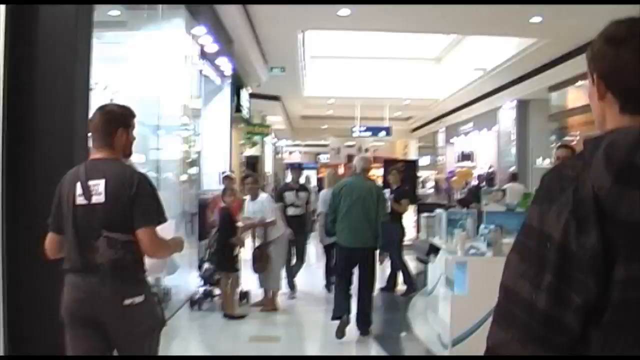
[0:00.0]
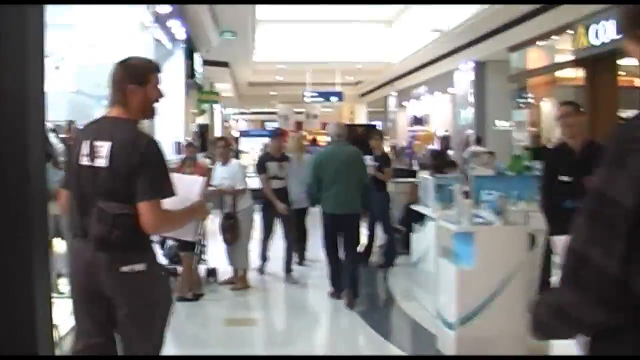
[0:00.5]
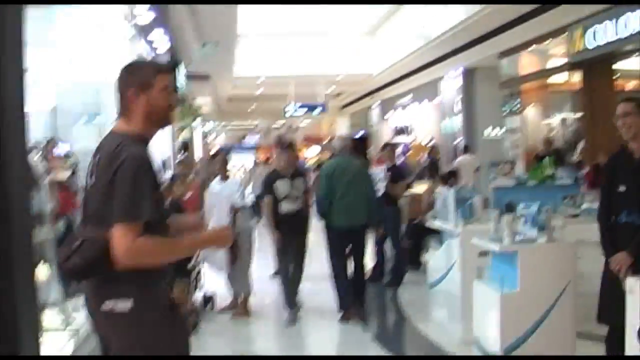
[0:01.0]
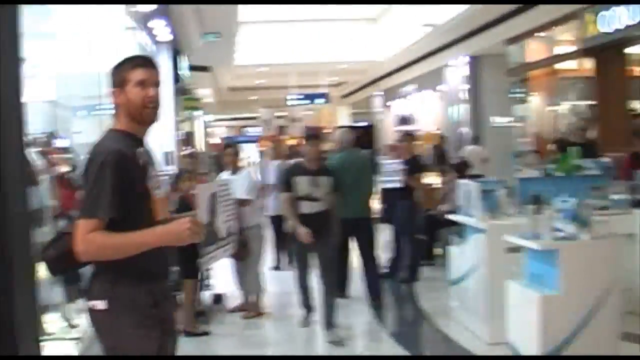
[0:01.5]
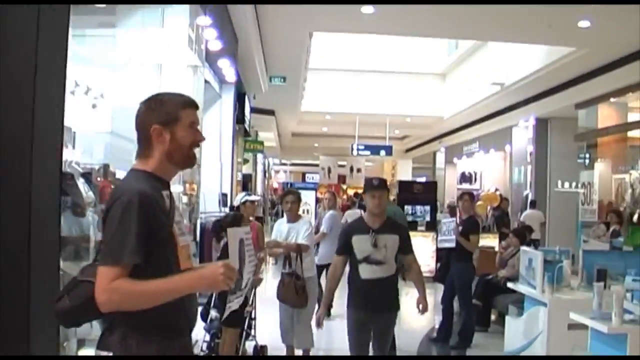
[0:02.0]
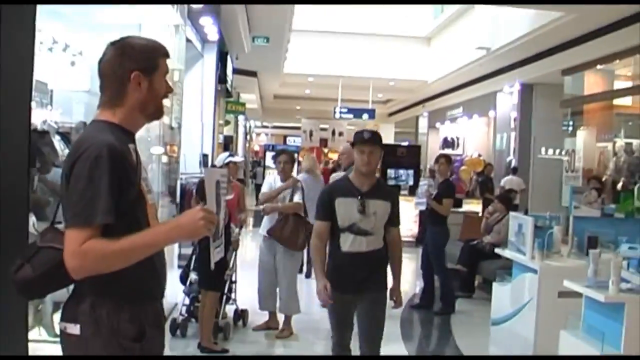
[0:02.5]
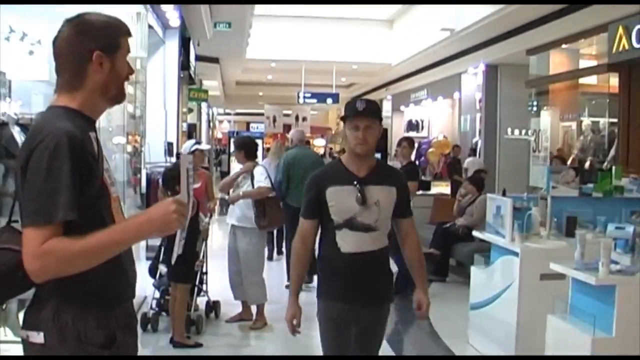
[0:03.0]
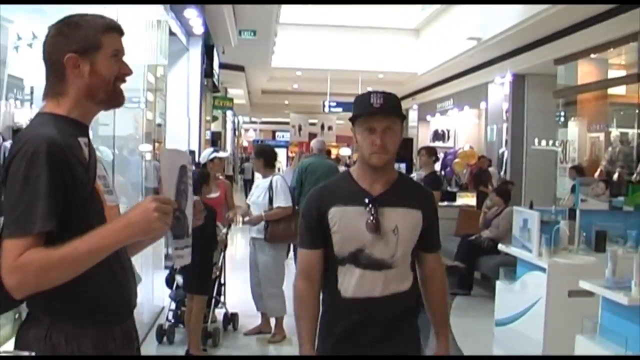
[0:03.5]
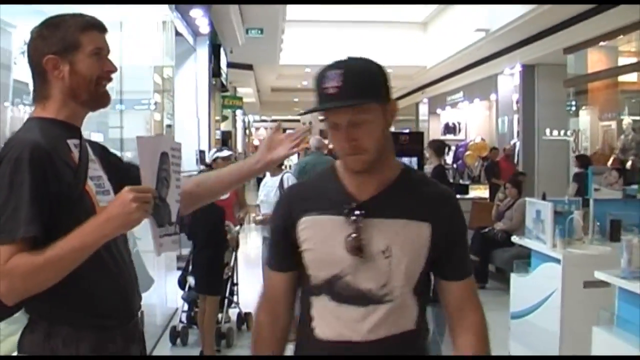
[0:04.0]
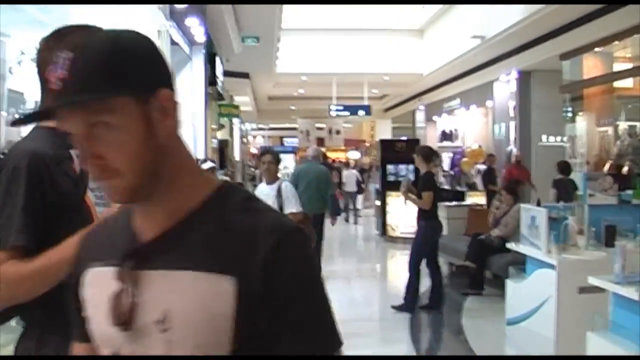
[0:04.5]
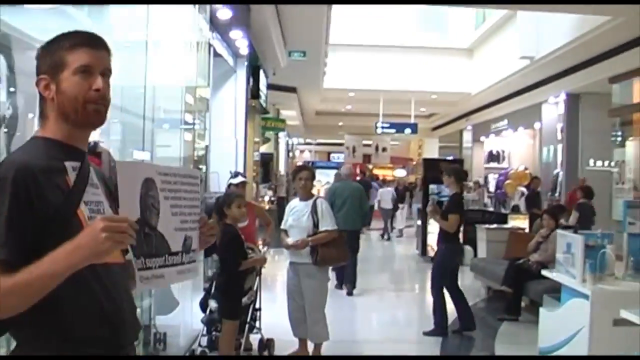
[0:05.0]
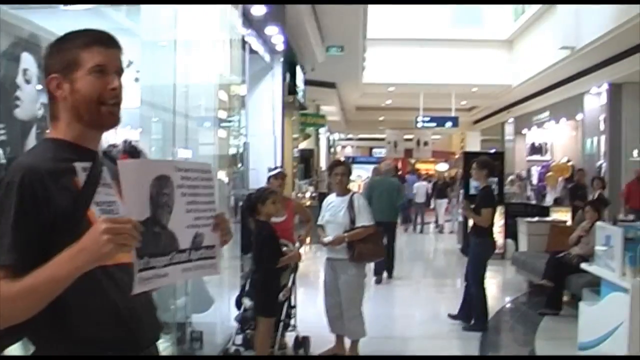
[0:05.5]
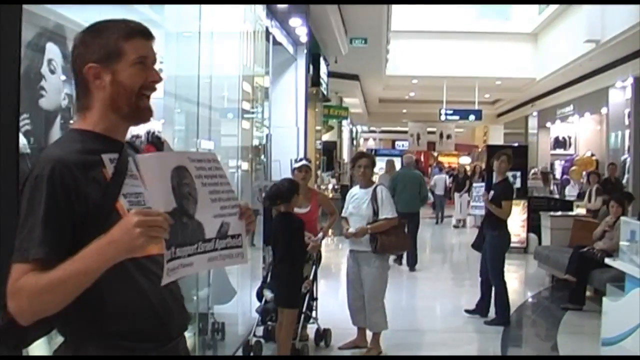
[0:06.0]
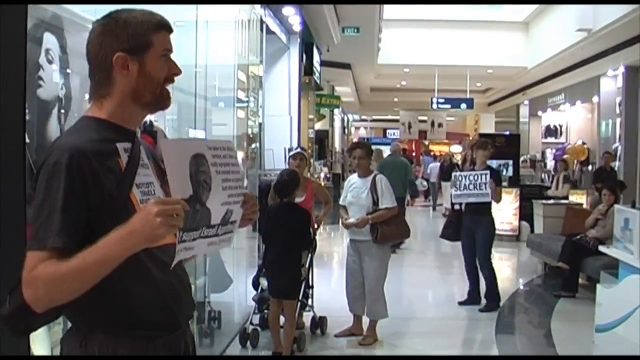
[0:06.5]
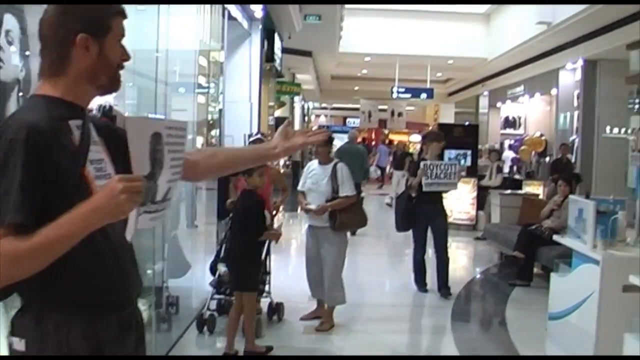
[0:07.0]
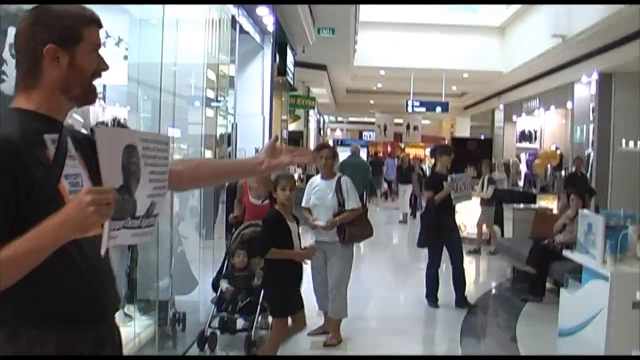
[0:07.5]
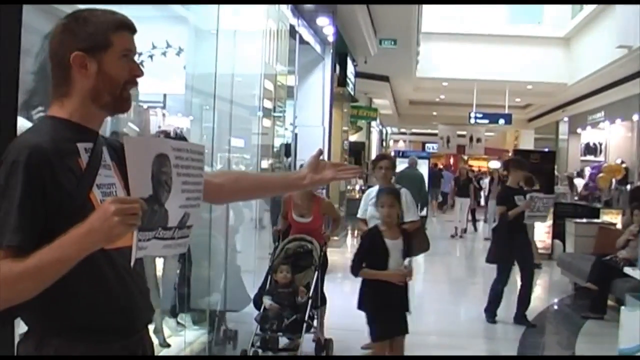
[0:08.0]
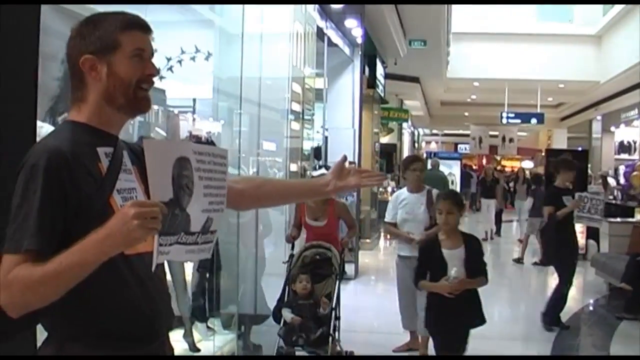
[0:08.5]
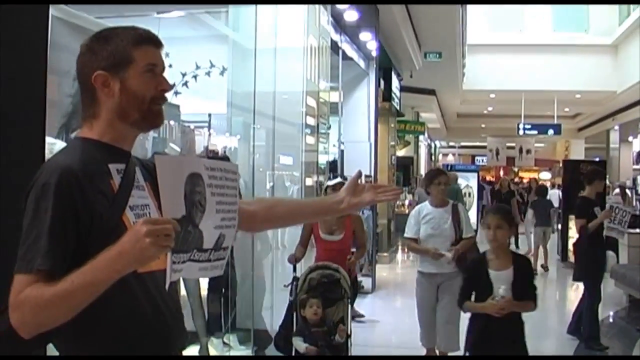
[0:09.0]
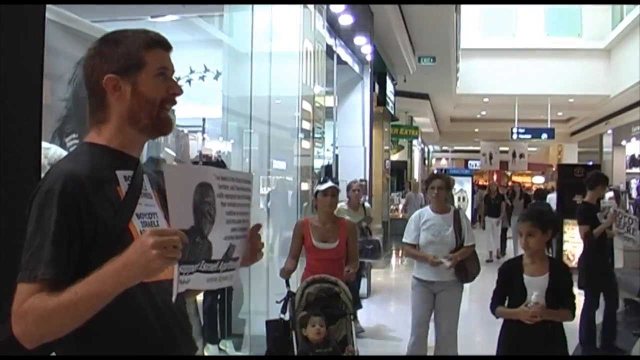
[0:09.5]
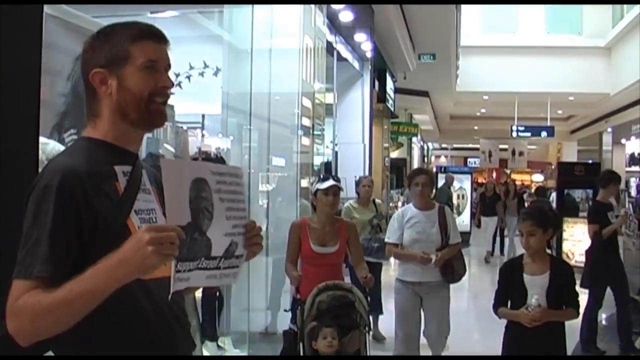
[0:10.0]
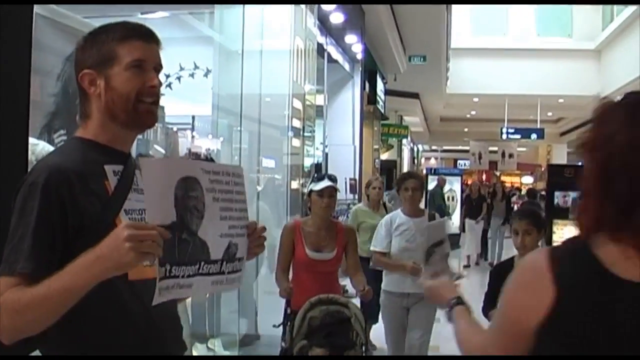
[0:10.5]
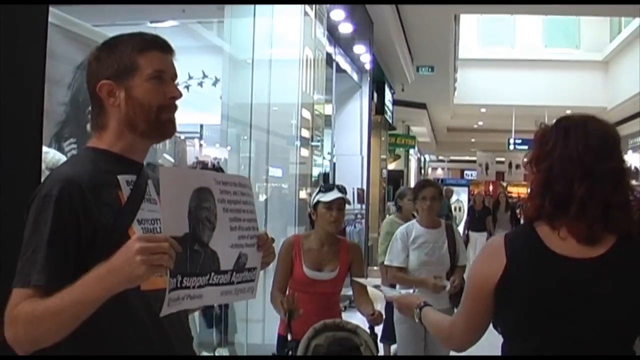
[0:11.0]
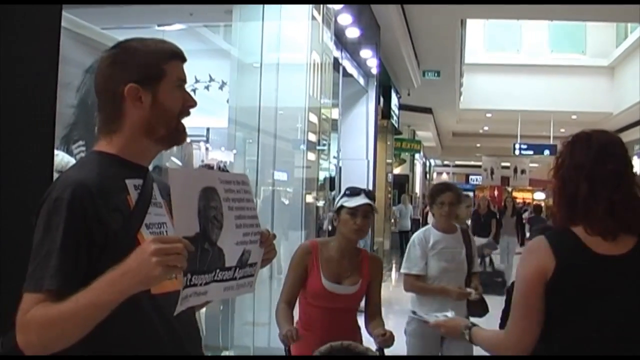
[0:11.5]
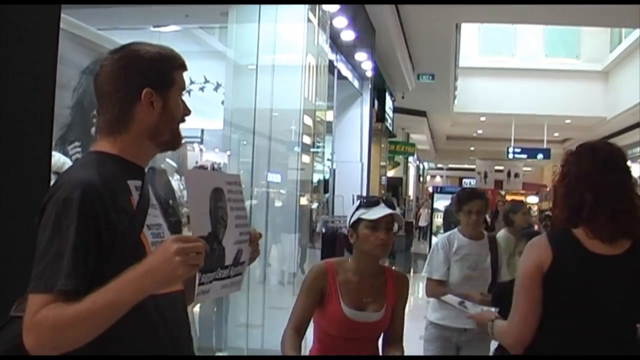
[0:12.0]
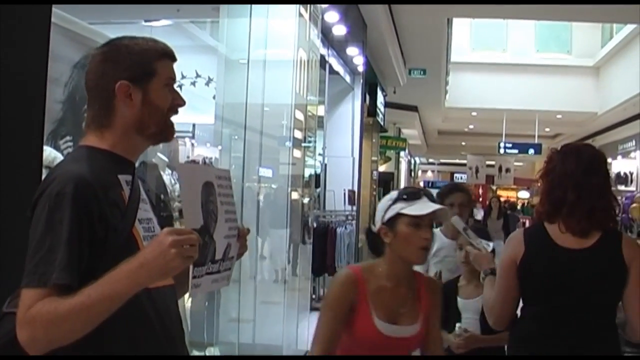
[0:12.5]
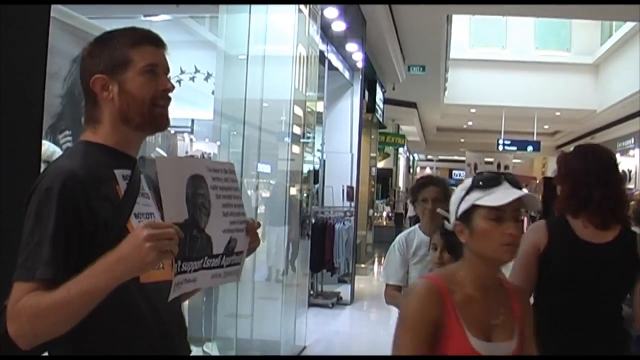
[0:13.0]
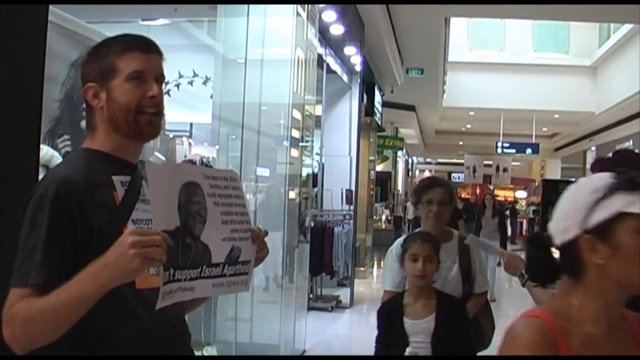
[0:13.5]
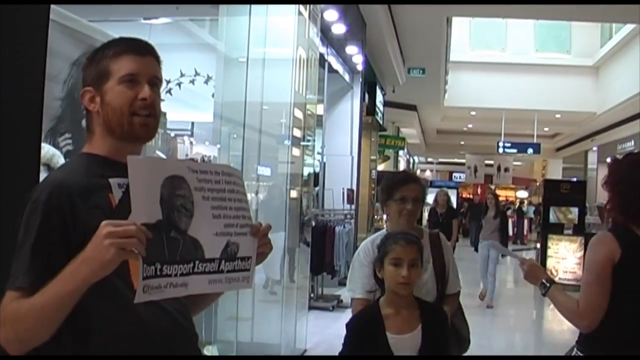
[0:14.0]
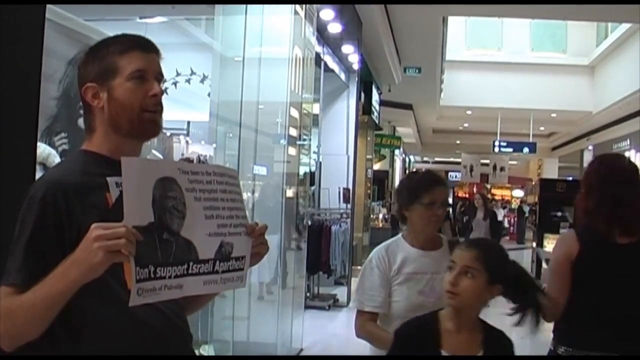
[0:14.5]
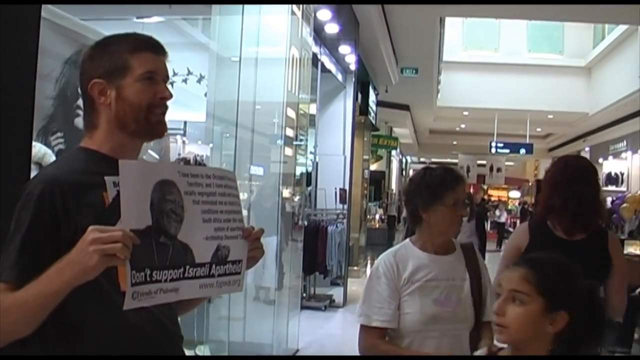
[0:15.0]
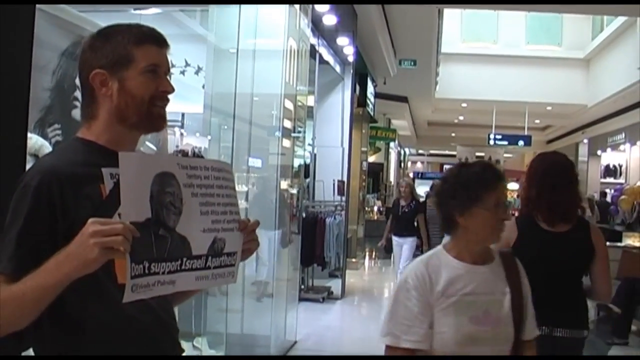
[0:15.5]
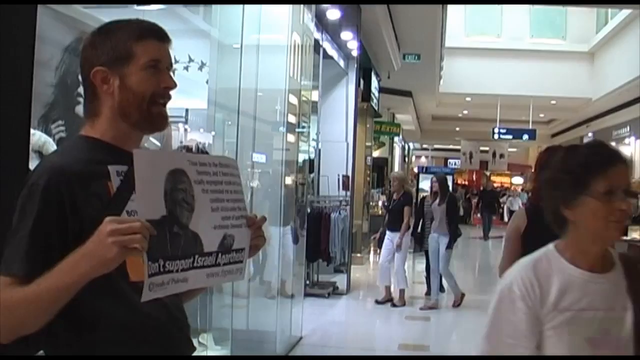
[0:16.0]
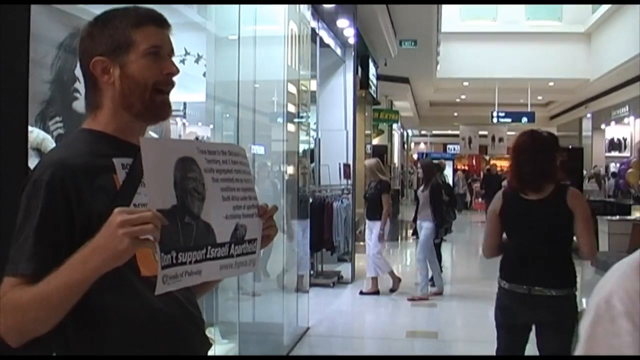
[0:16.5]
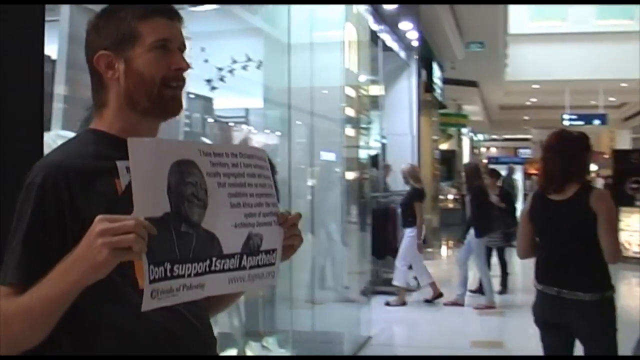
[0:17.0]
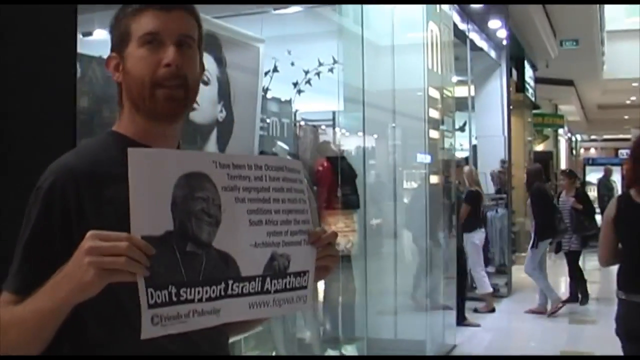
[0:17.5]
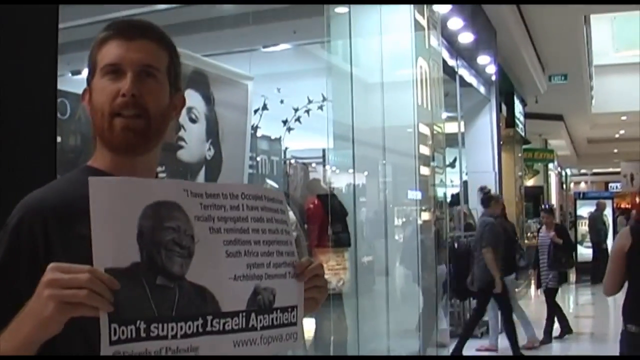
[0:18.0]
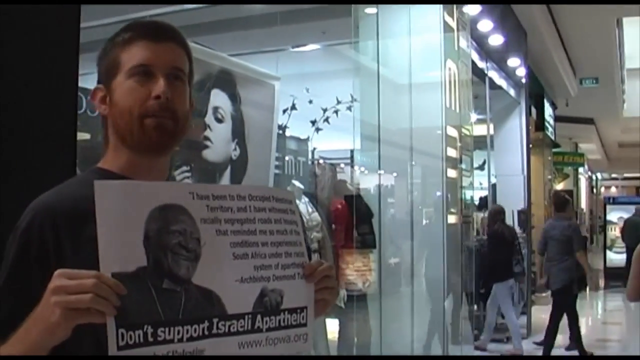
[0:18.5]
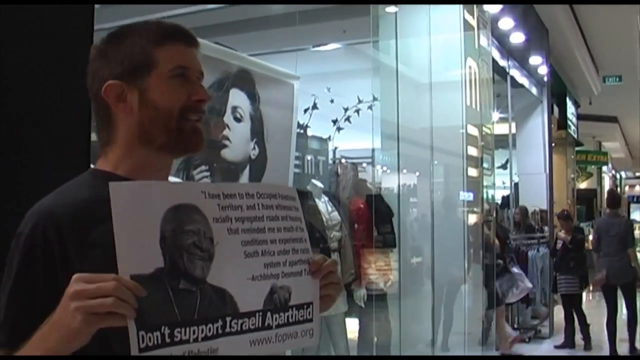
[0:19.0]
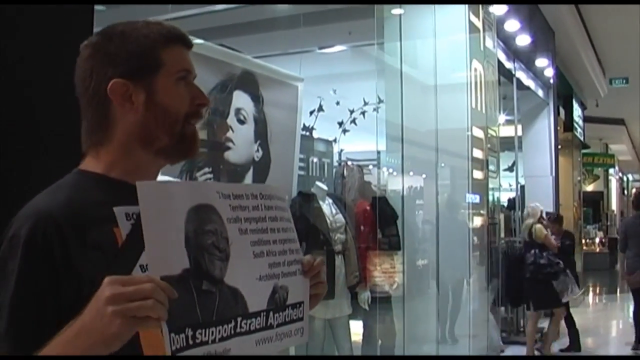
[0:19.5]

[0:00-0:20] A large group of people is in what appears to be an indoor mall. In the foreground on the left, a young brunette man with a beard holds up a piece of paper with a black person's face on it, looking right, along with text. The paper reads "don't support Israel apartheid" and "I have been to the occupied Palestinian territory," apparently a quote from Archbishop Desmond Tutu.